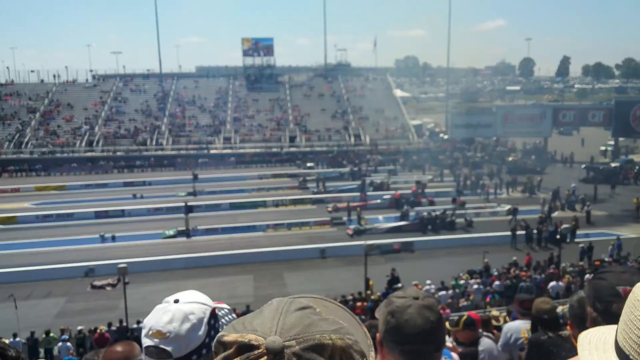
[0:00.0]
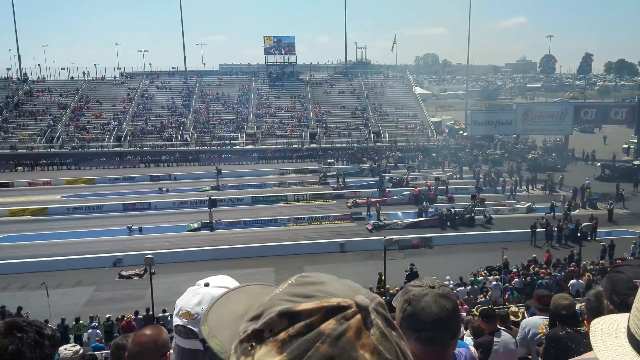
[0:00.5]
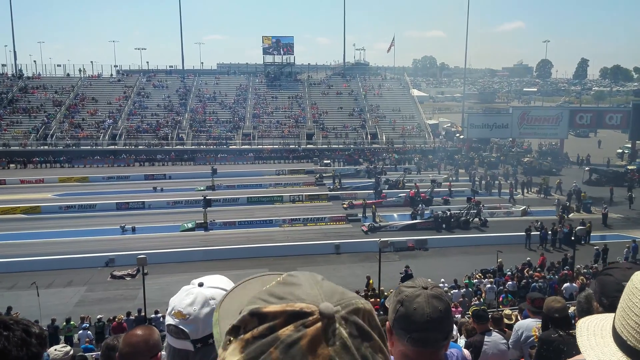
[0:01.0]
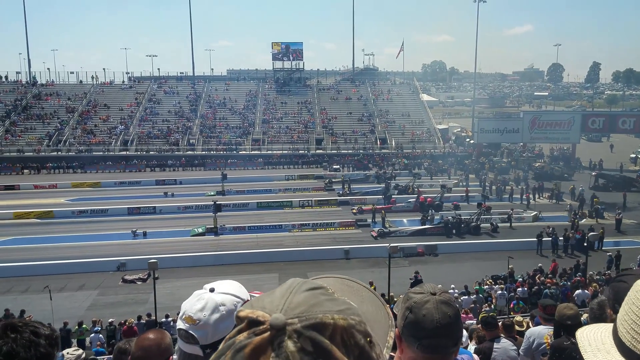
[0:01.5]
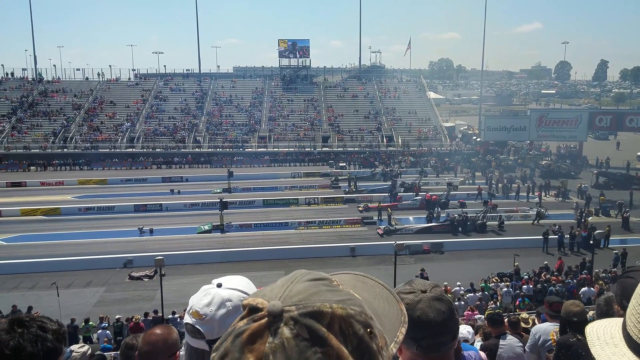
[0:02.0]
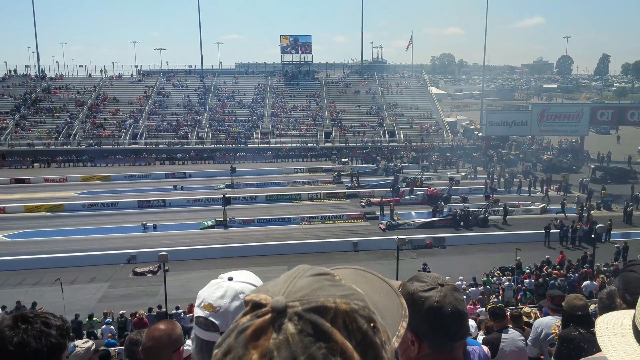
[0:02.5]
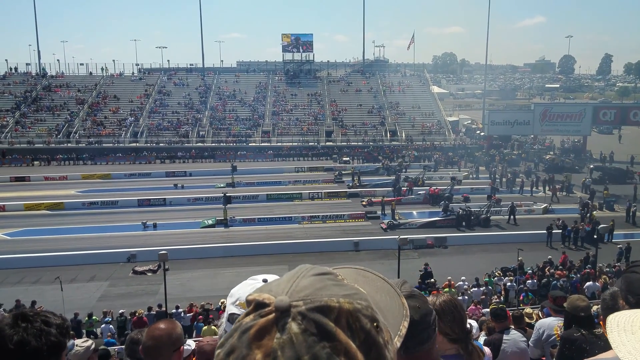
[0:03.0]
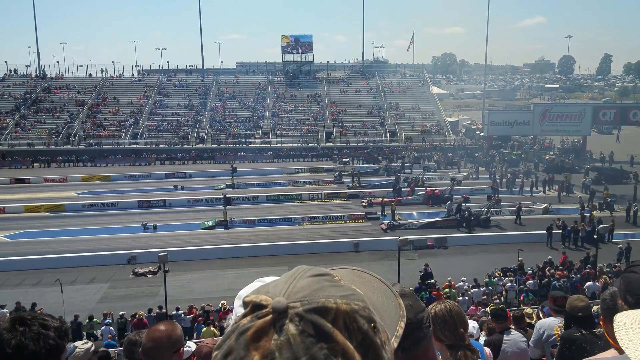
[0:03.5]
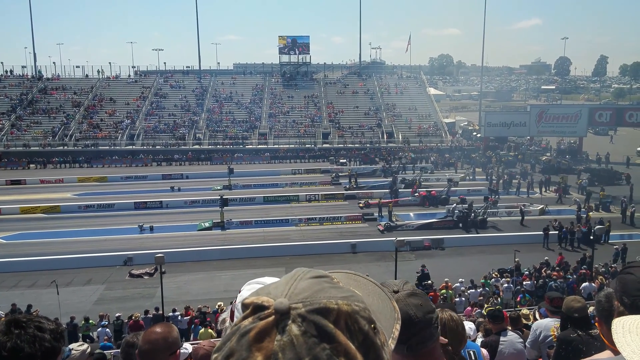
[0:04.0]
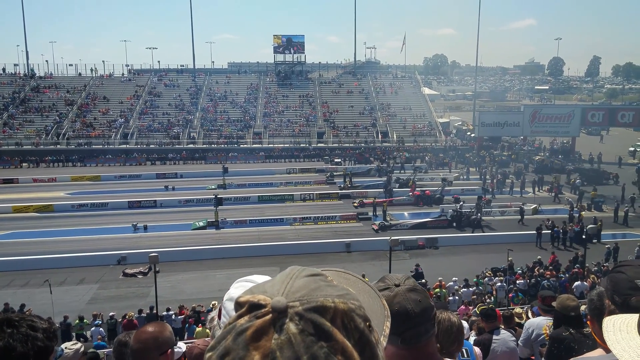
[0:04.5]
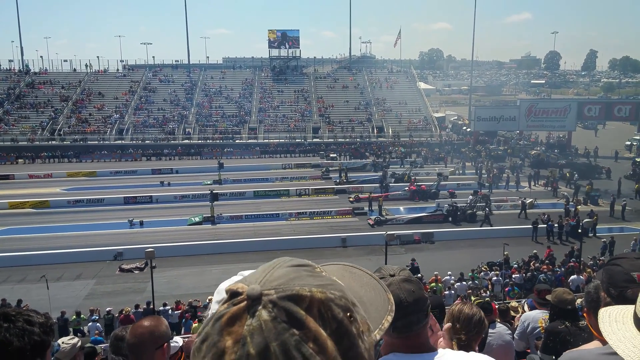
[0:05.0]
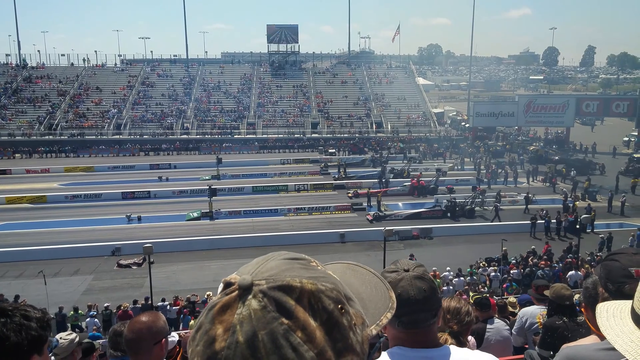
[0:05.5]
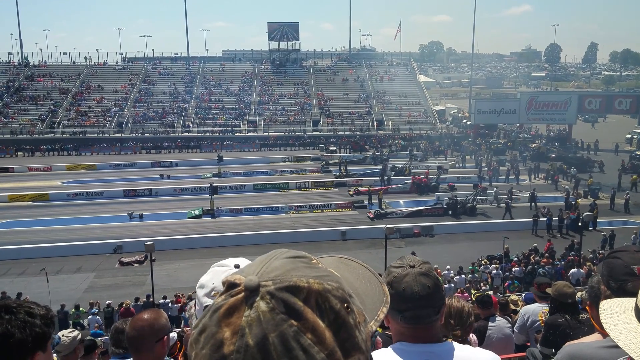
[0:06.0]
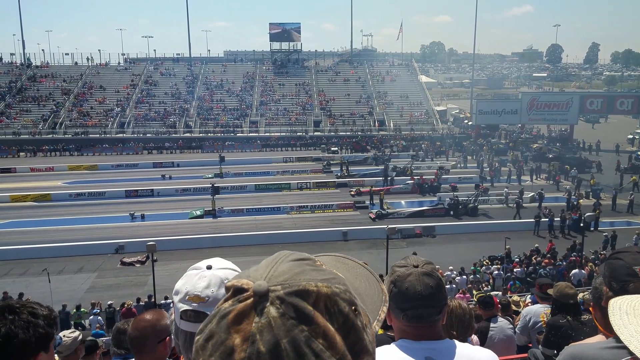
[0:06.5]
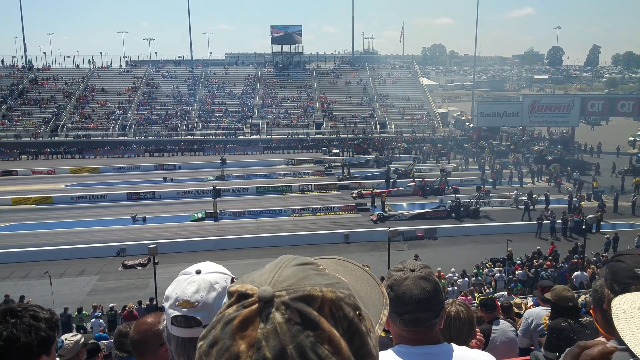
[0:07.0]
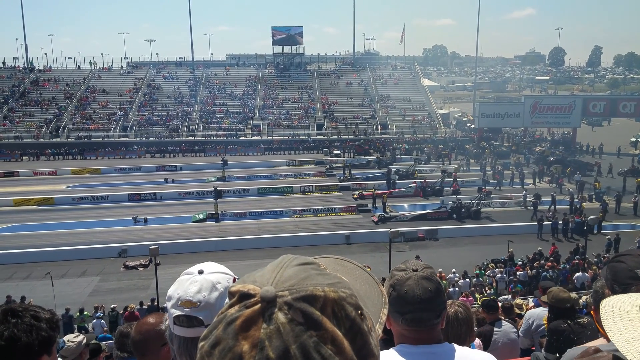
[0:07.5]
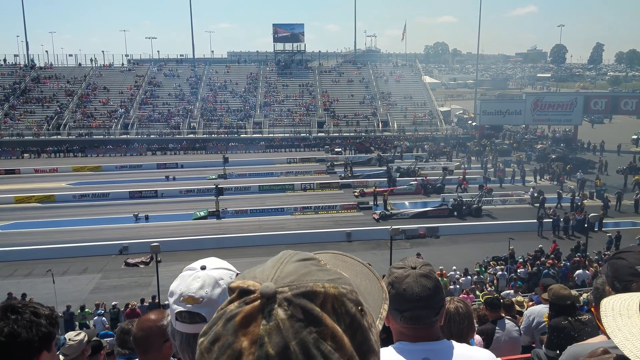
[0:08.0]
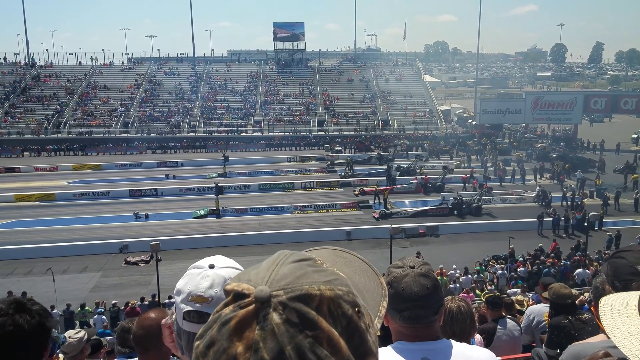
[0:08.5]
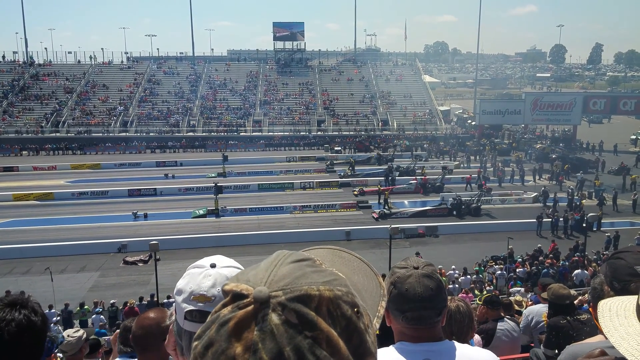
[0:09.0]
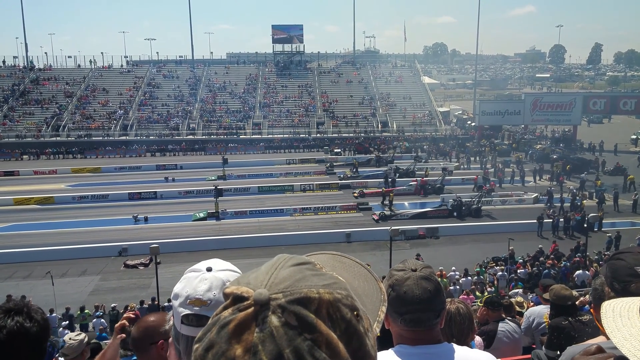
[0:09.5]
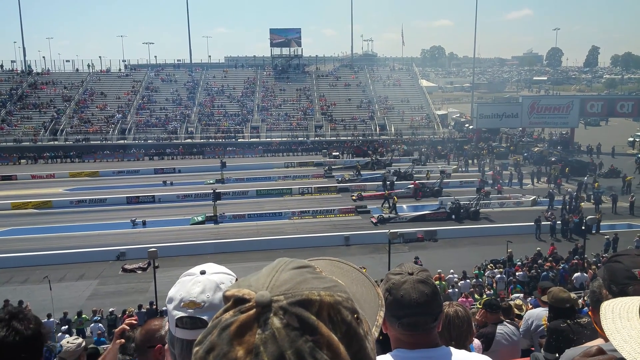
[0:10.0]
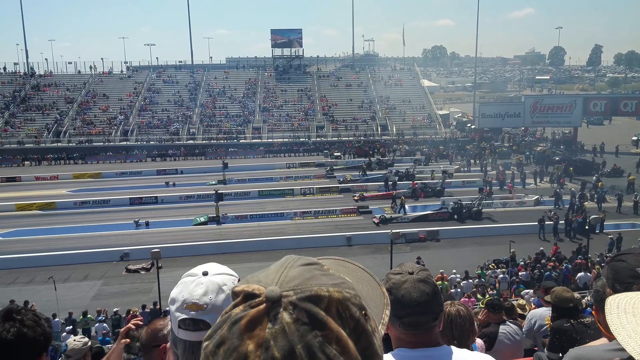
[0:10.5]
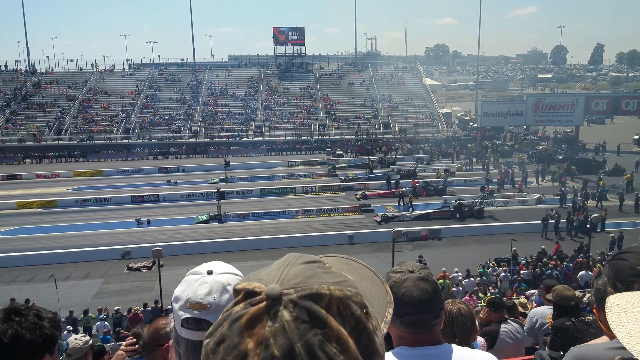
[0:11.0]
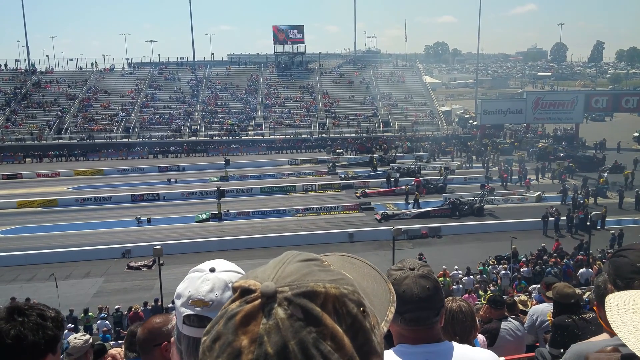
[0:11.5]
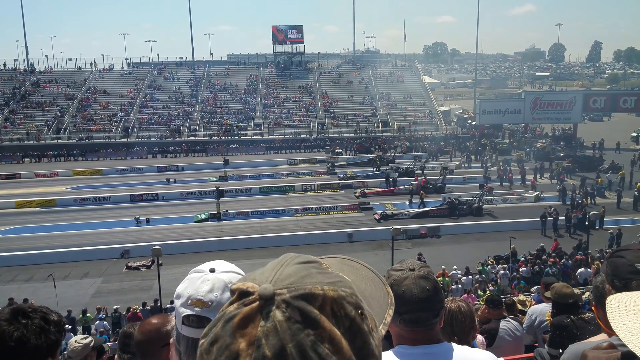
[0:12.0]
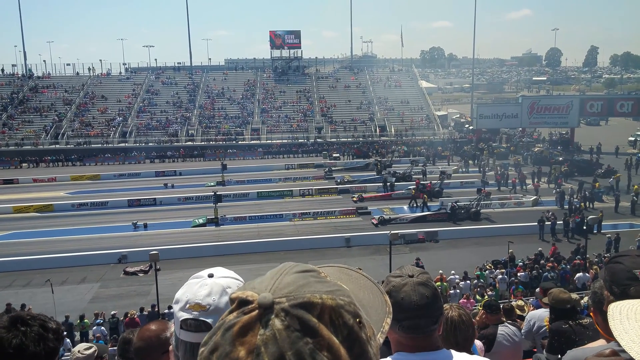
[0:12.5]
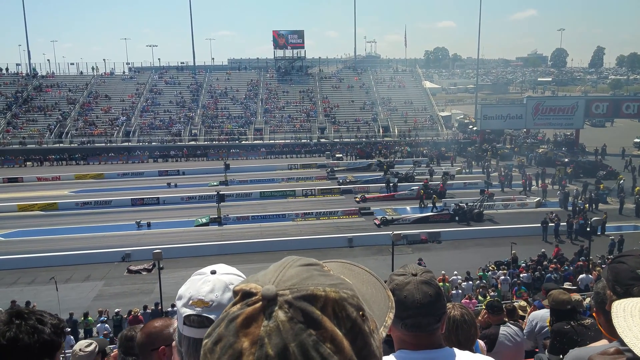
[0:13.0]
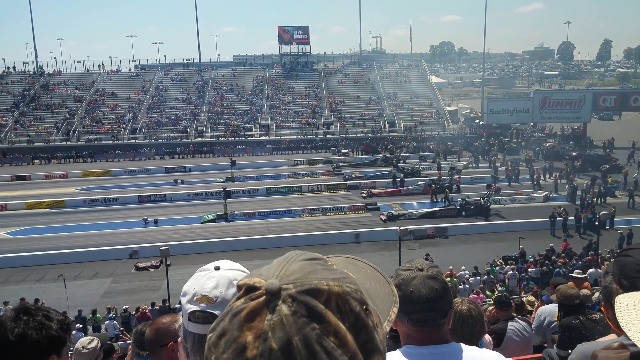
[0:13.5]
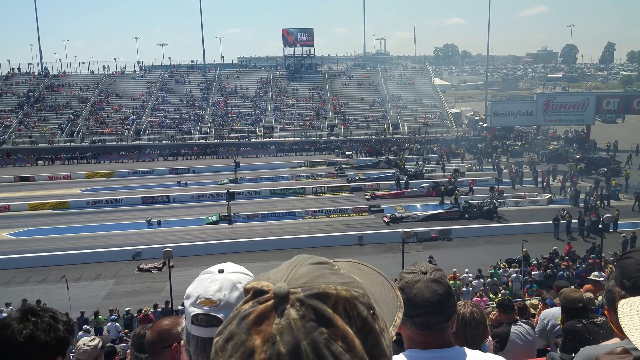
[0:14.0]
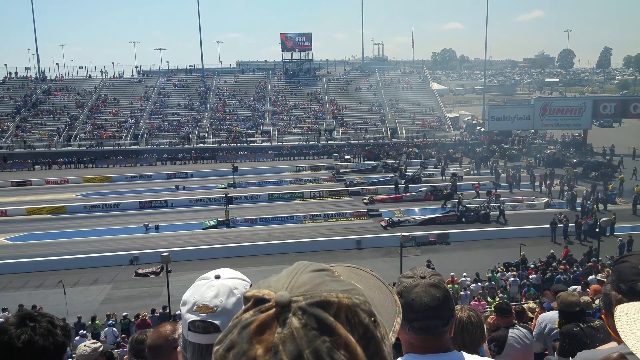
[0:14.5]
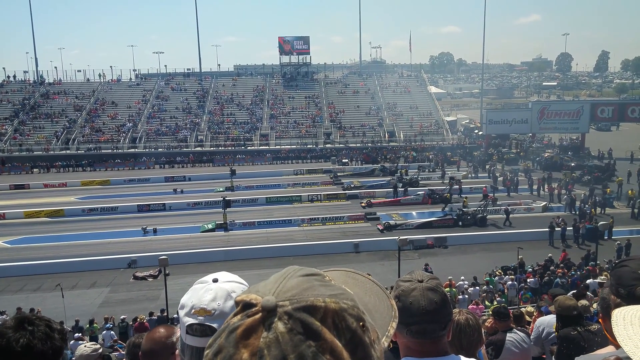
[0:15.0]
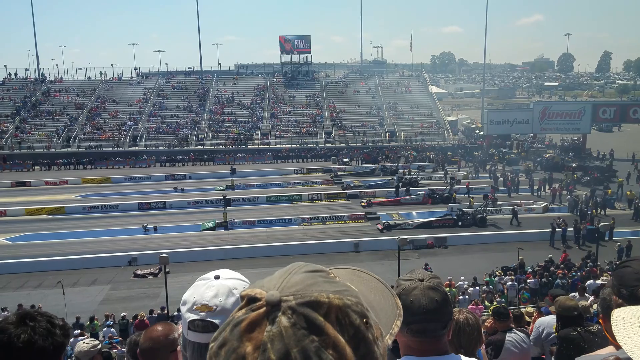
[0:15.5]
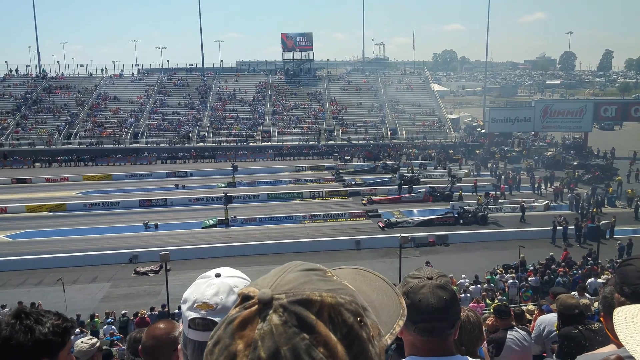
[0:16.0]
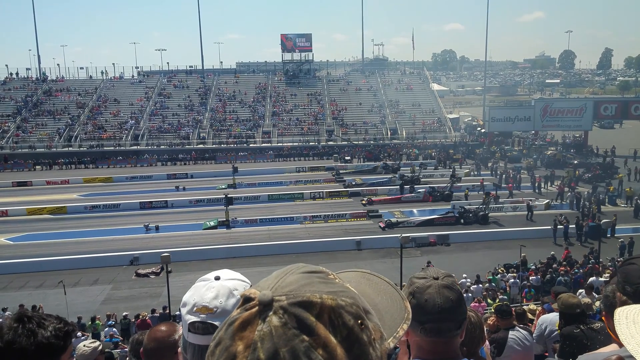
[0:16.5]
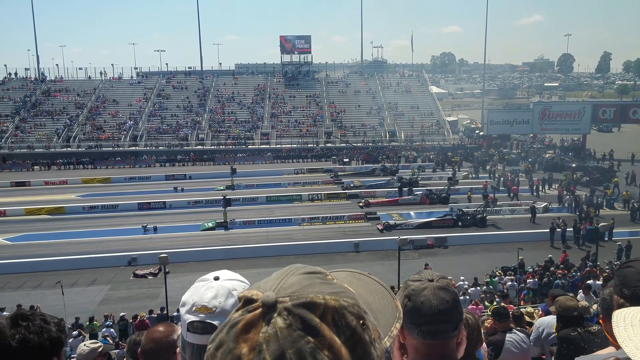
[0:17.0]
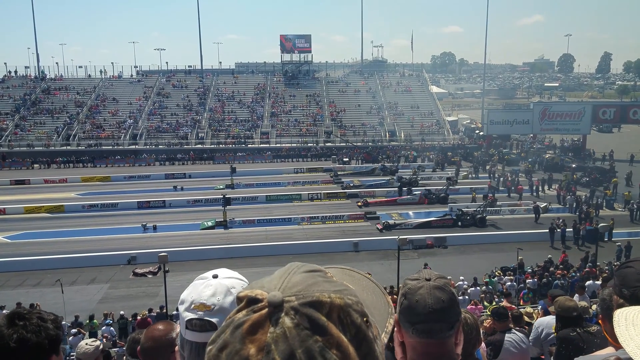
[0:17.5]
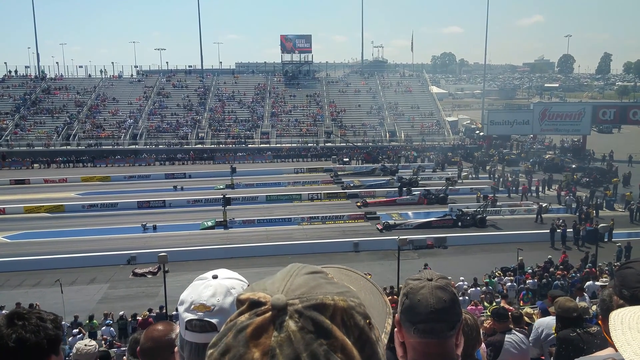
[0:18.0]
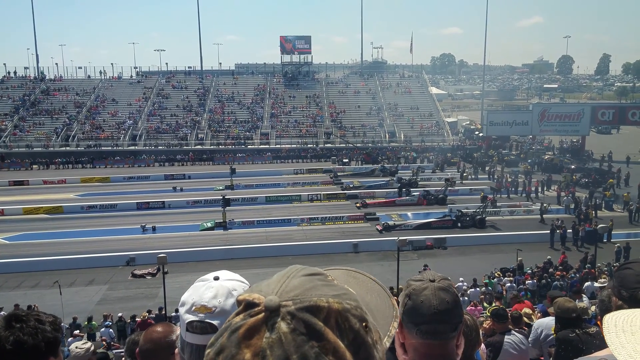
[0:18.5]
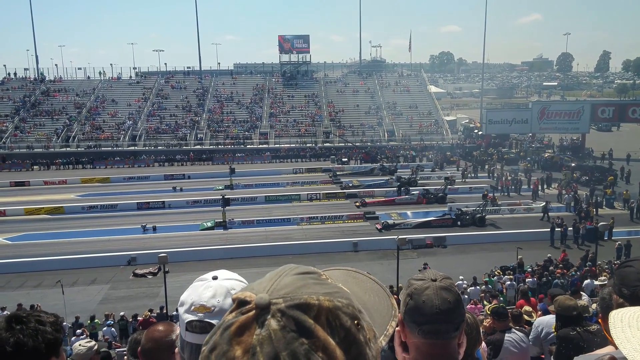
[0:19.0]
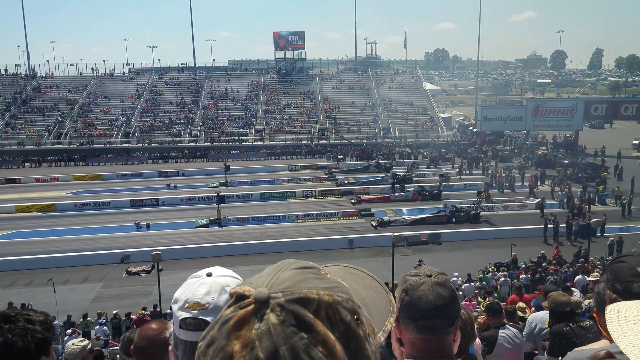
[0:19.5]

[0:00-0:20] What seems to be a race car driving event takes place outdoors, with large bleachers full of people watching. The track has about four lanes, each with a small race car with a very narrow front in the starting position before the race begins. Many people are on the track getting ready for the race, and signs in the background are from sponsors such as Smithfield and others. It looks like a very bright and sunny day; the crowd is dressed for warm weather, and many people wear hats and baseball caps to shield themselves from the sun. The race seems to be in preparation to begin, with the crowd anxiously awaiting the start as the teams make the last steps before the race.